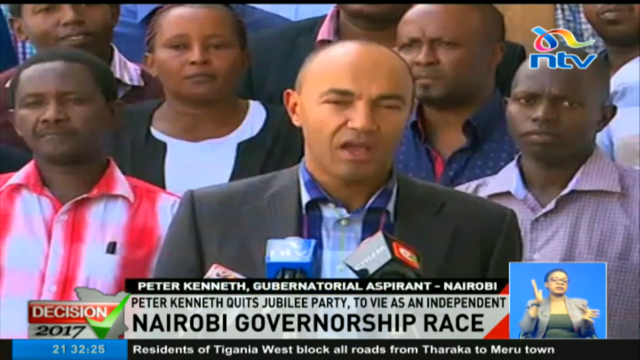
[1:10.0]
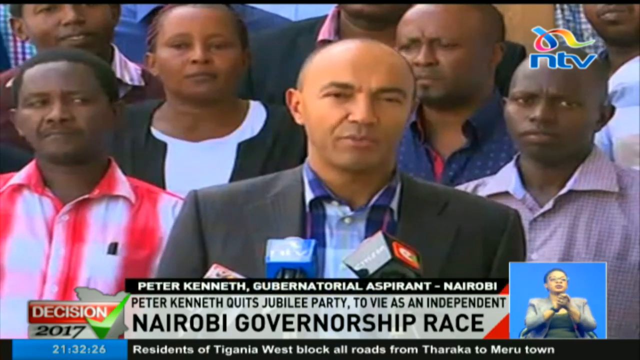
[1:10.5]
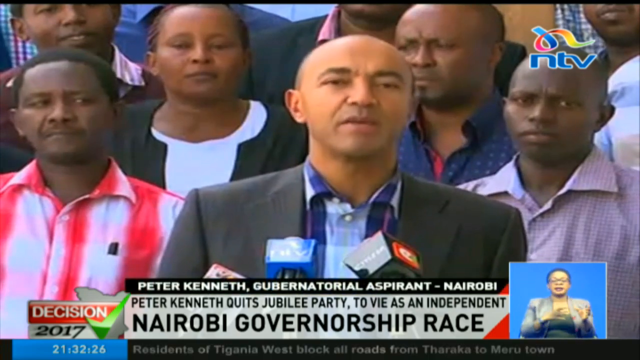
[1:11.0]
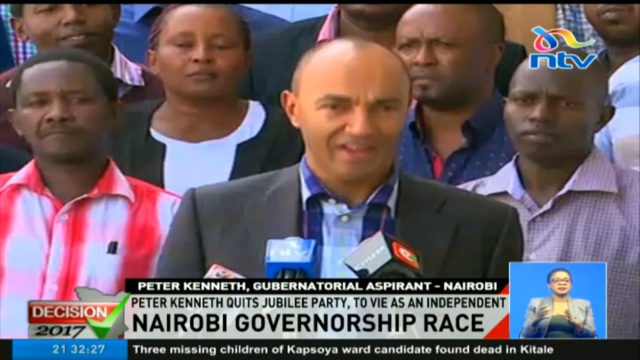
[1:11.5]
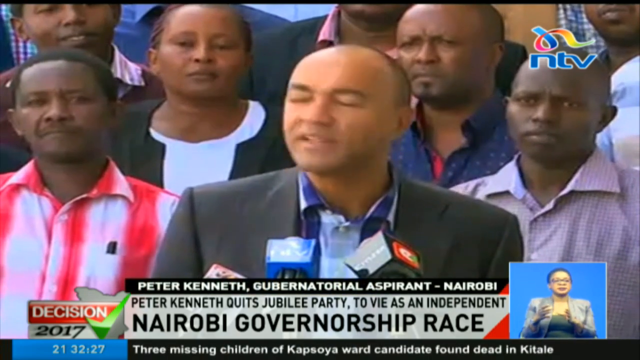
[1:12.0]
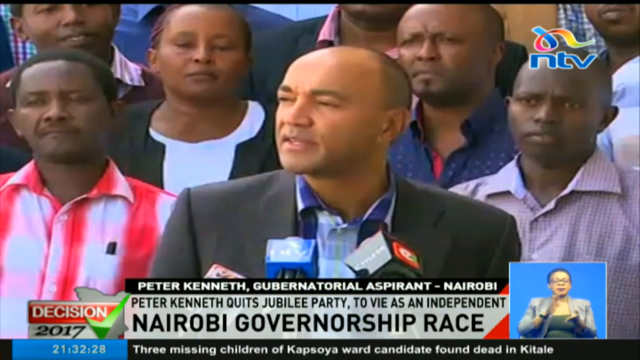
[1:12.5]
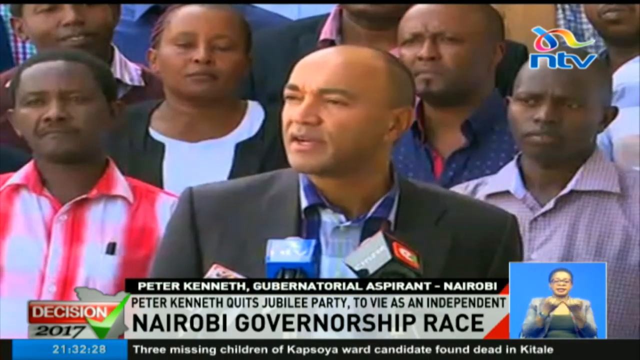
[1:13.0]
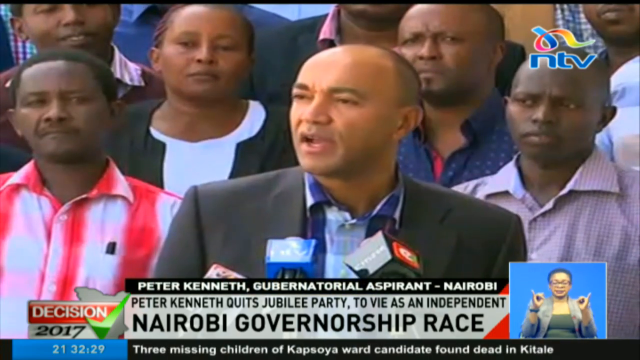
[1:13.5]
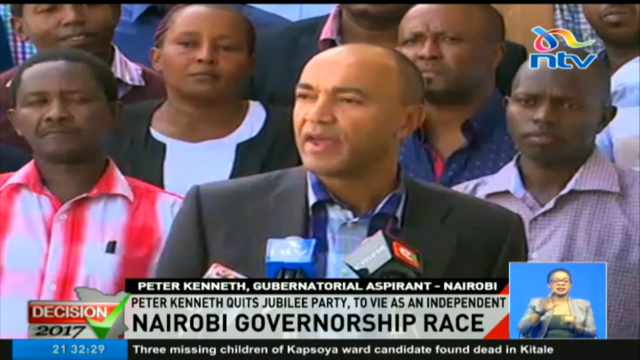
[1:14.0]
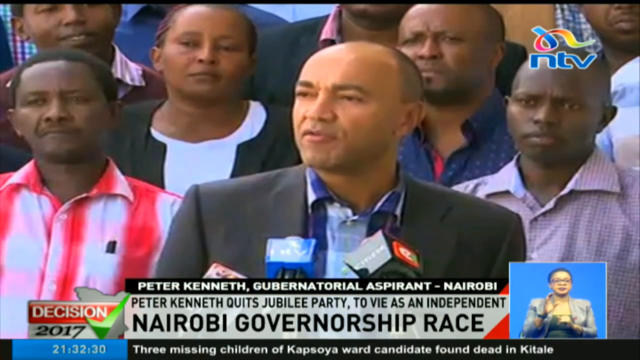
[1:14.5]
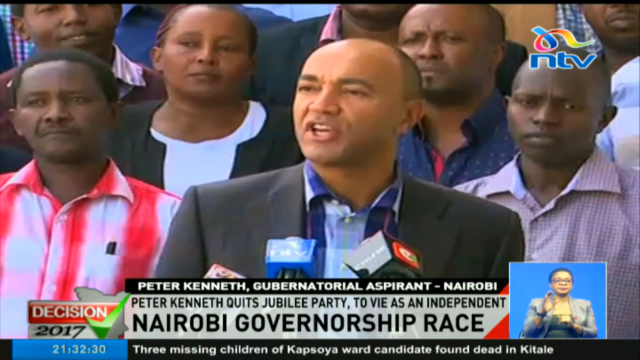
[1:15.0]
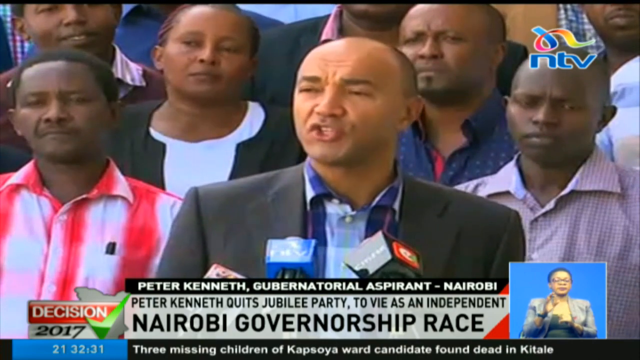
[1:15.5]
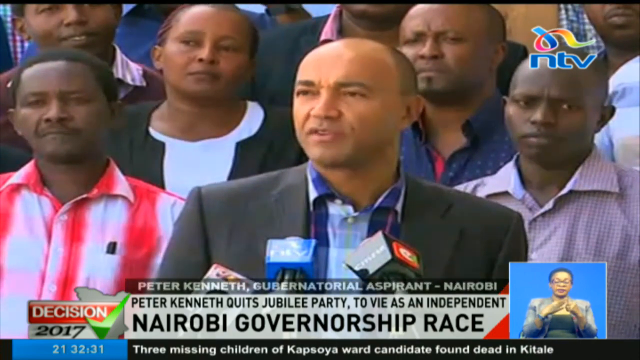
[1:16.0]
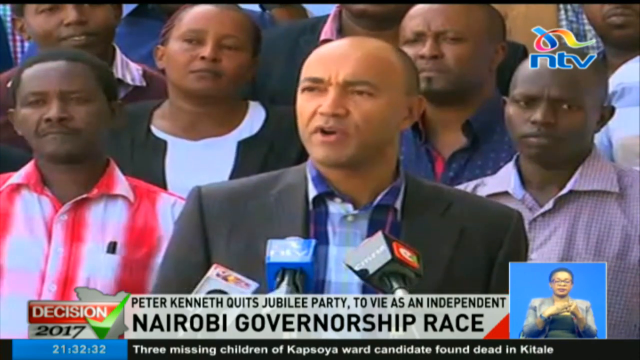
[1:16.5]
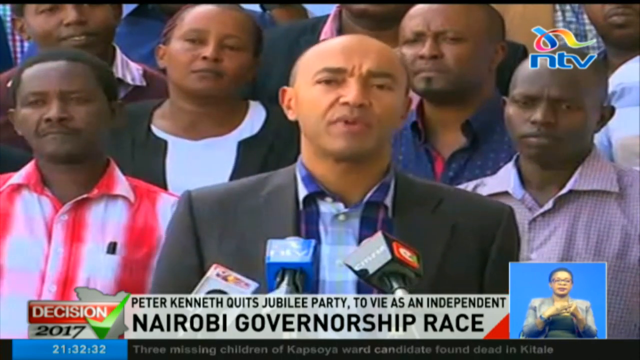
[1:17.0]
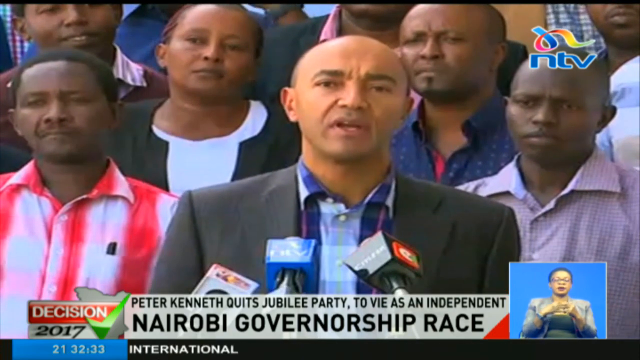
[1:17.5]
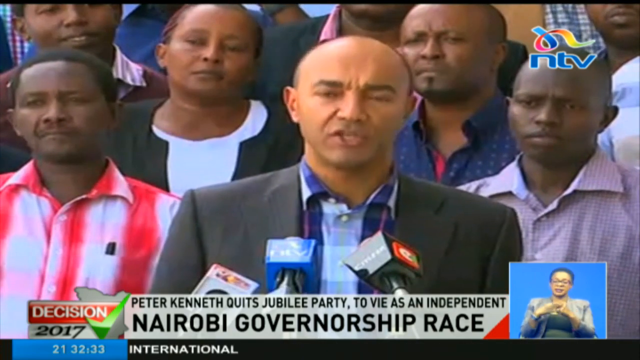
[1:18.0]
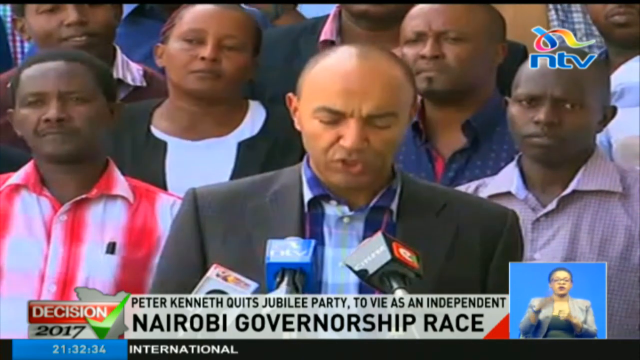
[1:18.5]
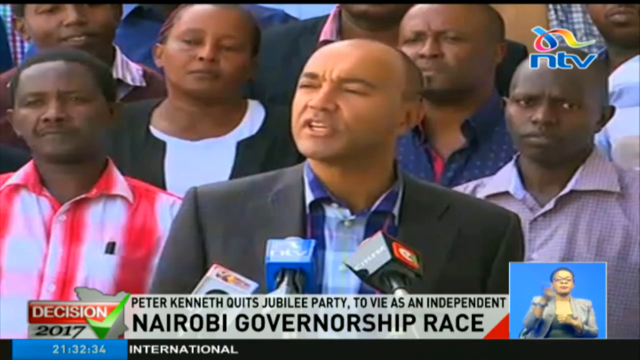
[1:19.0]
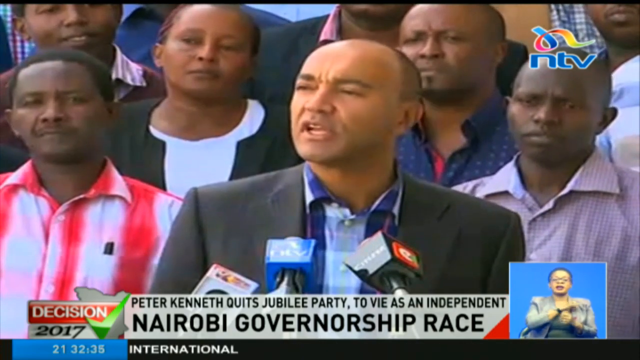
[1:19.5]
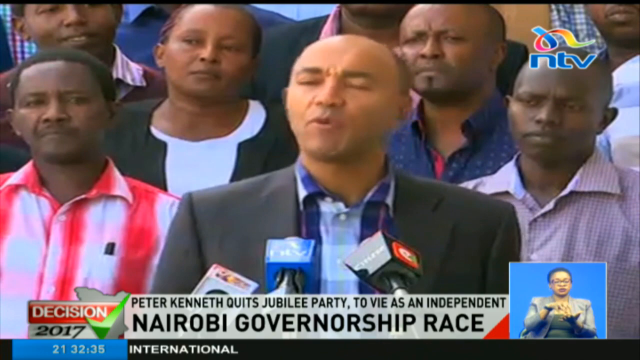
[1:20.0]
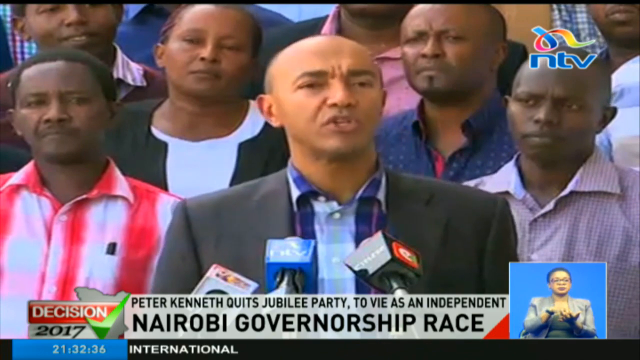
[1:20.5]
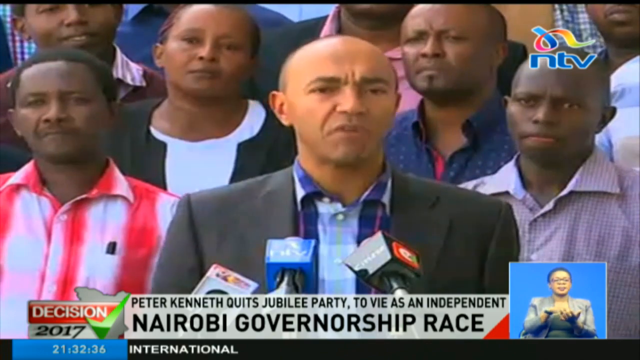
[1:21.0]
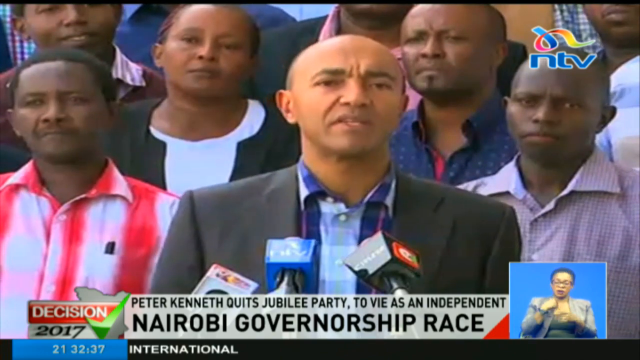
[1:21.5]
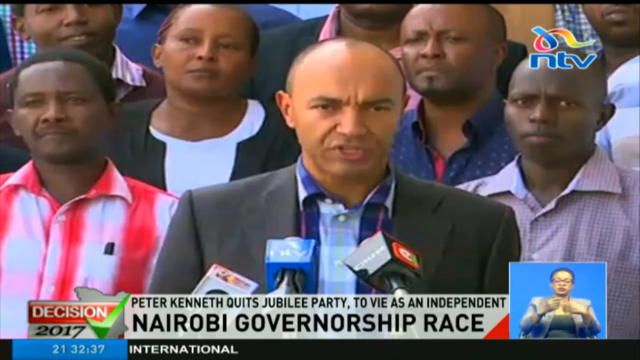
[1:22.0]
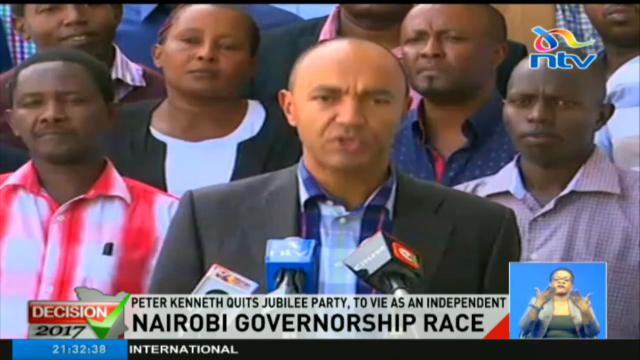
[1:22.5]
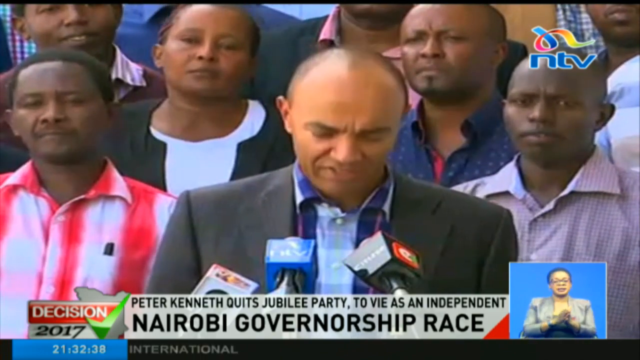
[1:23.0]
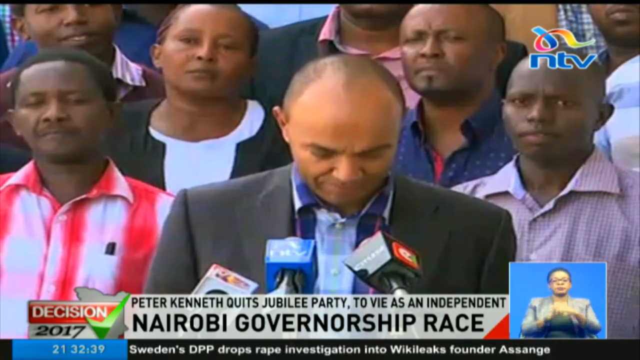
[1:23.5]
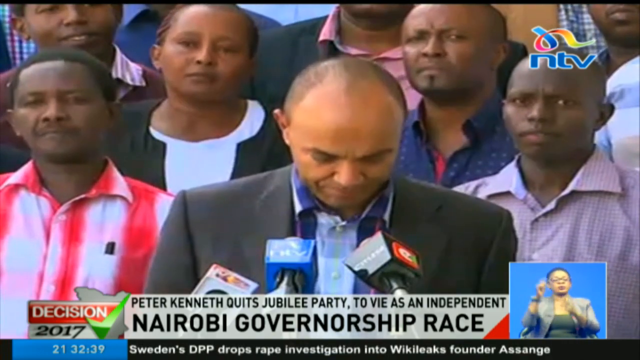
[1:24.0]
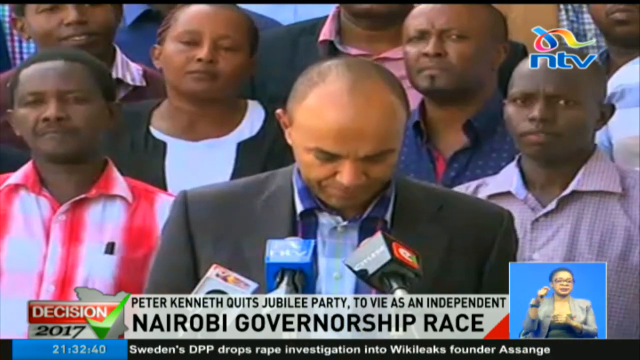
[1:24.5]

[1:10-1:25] The man stands in the center of the screen facing the camera. Below him, a black banner with white letters says "Peter Kenneth gubernatorial aspirant," and below that it says "Peter Kenneth quits Jubilee Party." The man talks into some microphones, with some people in the background. In the bottom right of the screen, in a blue square, a woman does sign language, translating what the man is saying. The man looks to the left of the screen, looks down, looks back to the left, looks down again, nods his head up and down, then looks down.